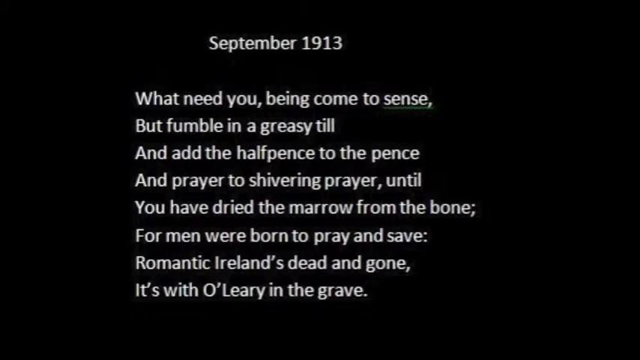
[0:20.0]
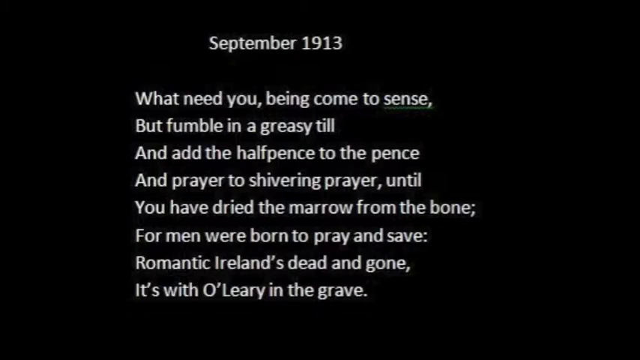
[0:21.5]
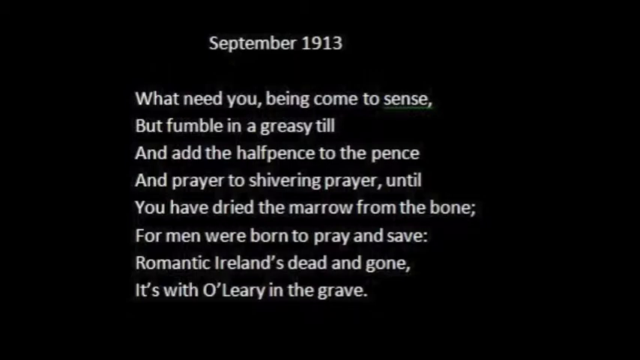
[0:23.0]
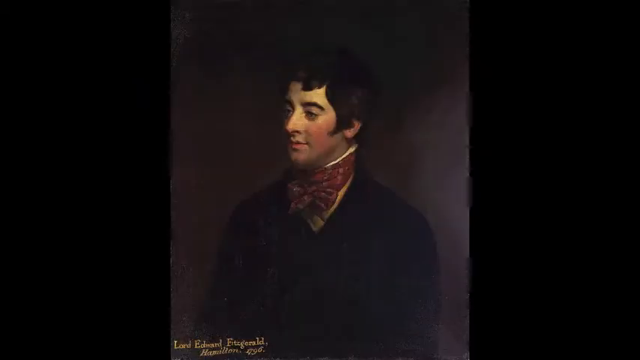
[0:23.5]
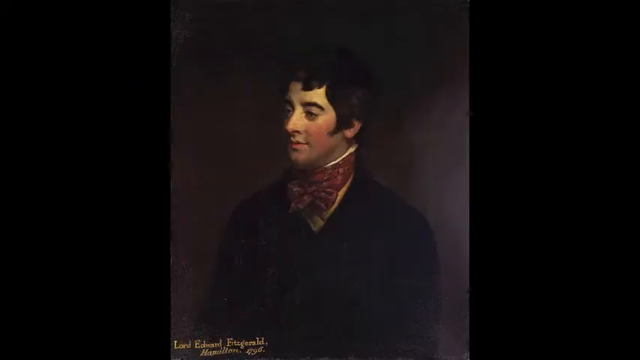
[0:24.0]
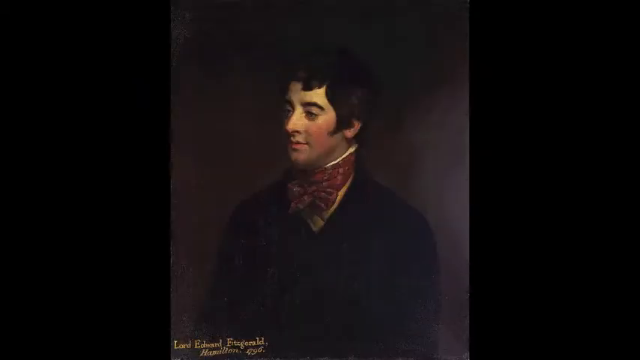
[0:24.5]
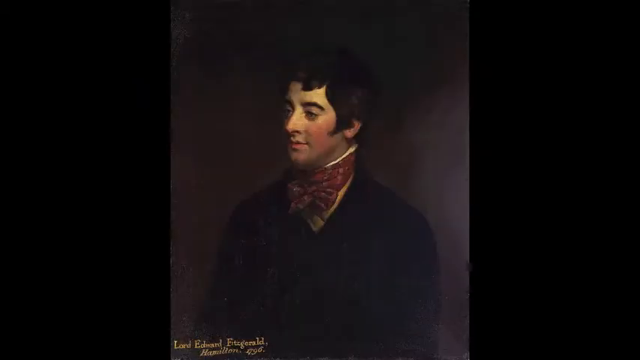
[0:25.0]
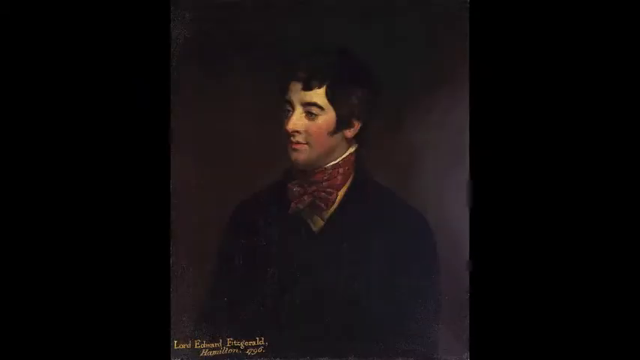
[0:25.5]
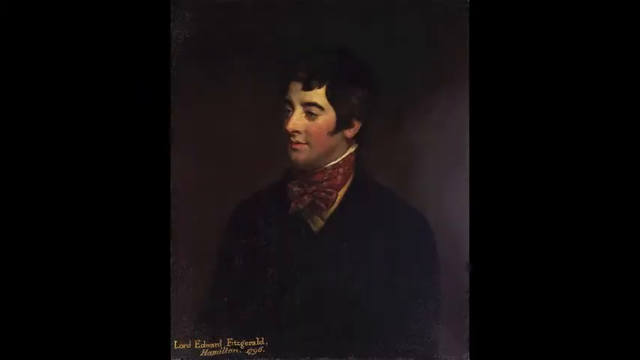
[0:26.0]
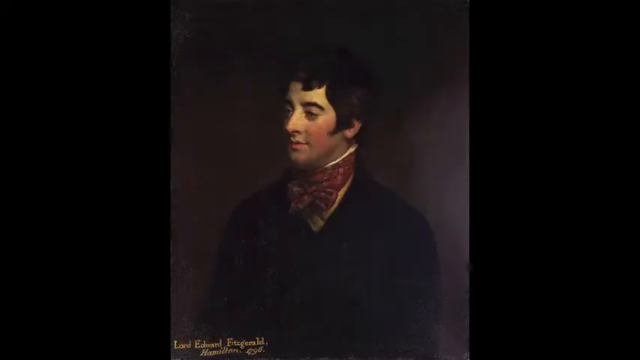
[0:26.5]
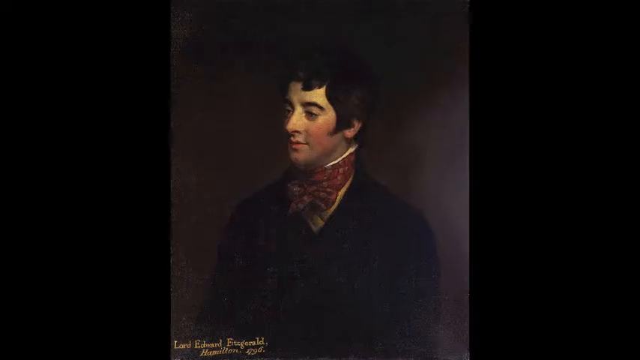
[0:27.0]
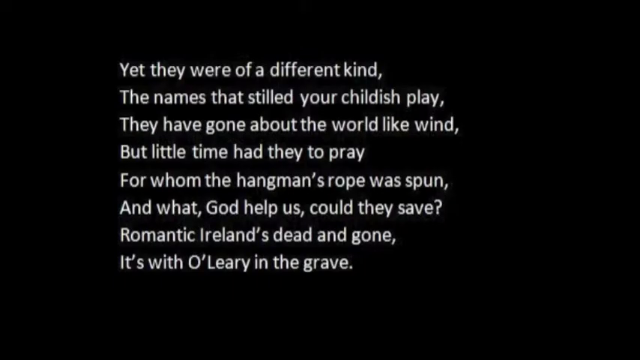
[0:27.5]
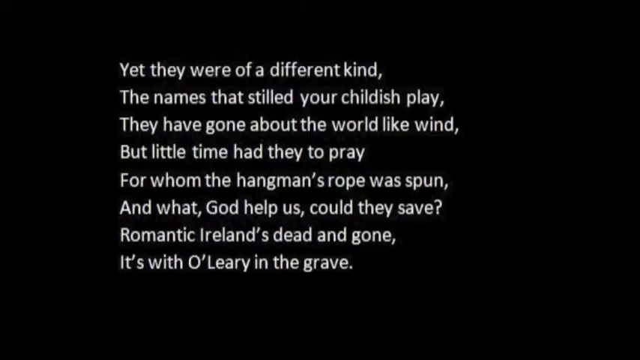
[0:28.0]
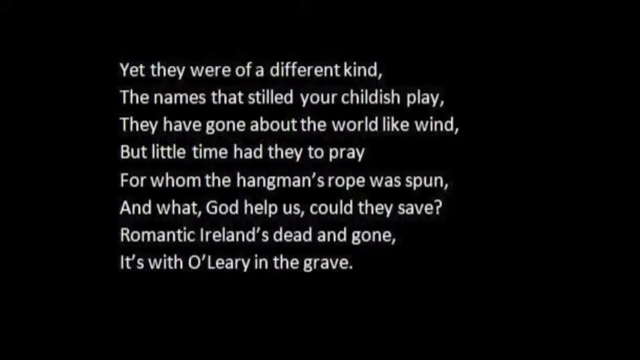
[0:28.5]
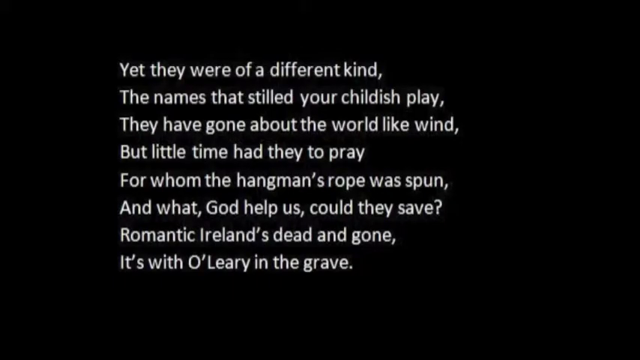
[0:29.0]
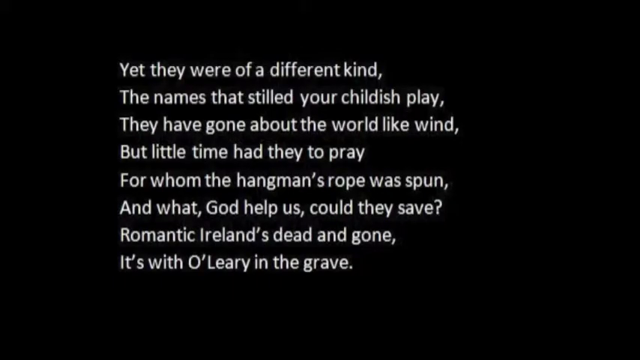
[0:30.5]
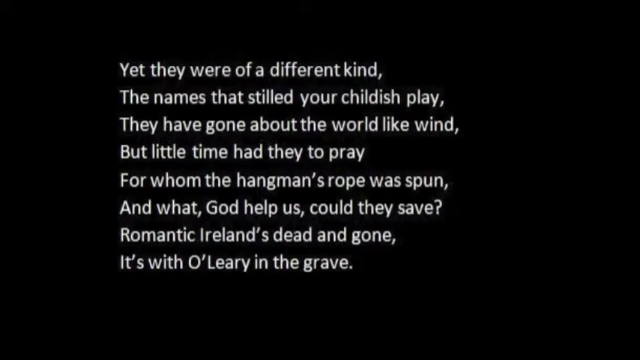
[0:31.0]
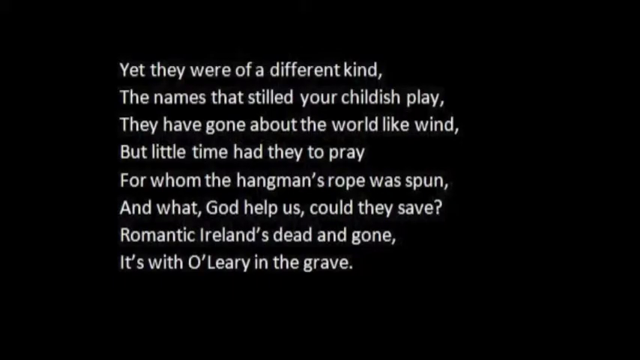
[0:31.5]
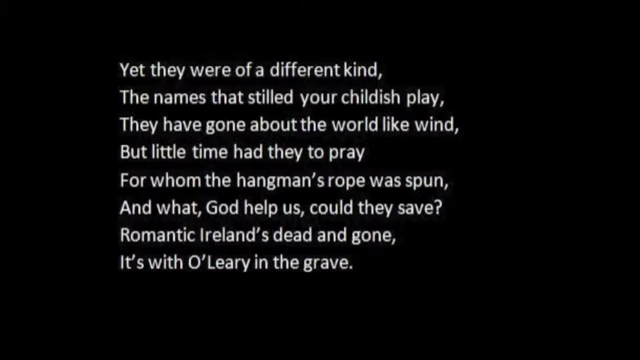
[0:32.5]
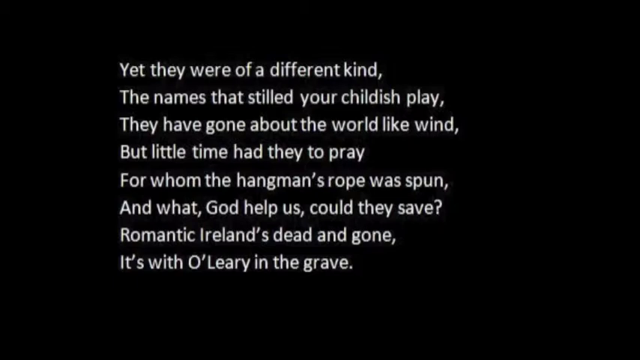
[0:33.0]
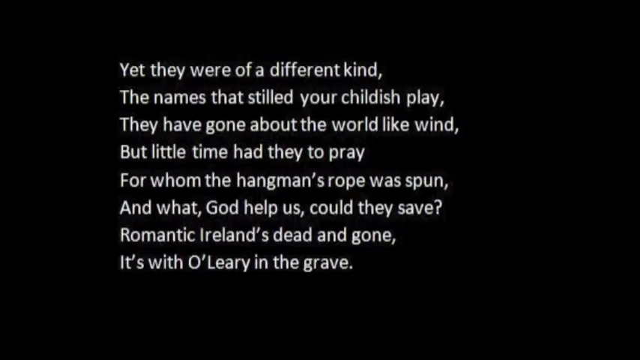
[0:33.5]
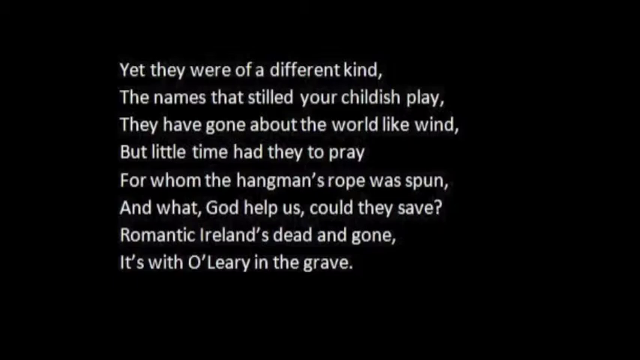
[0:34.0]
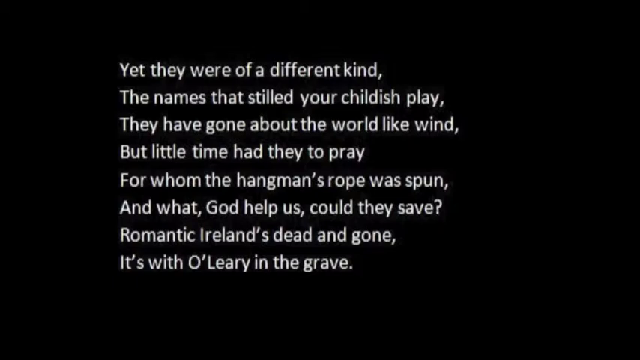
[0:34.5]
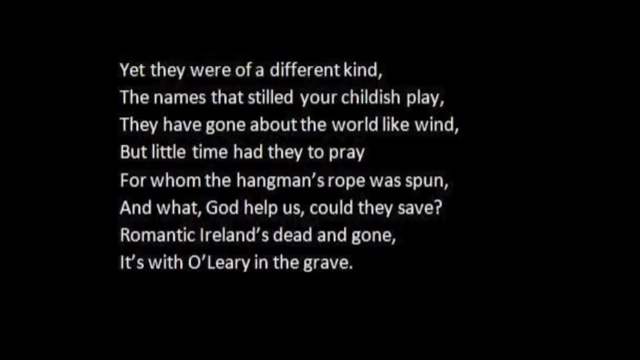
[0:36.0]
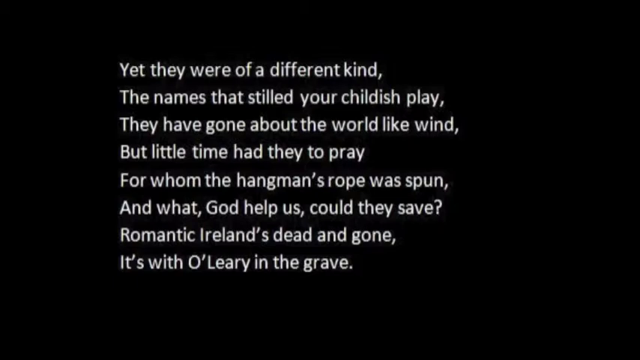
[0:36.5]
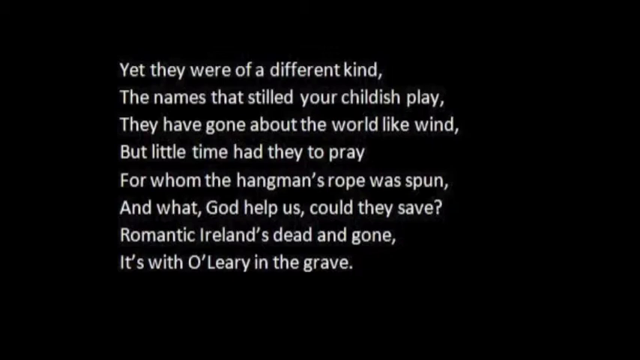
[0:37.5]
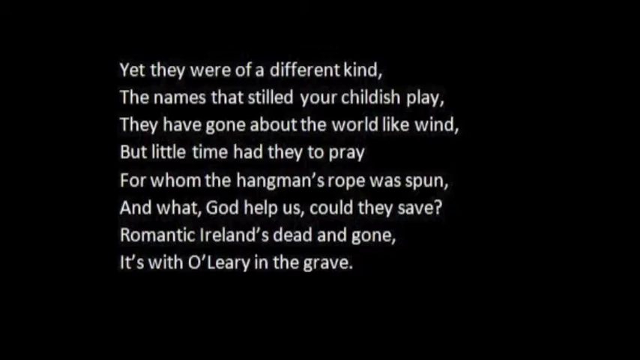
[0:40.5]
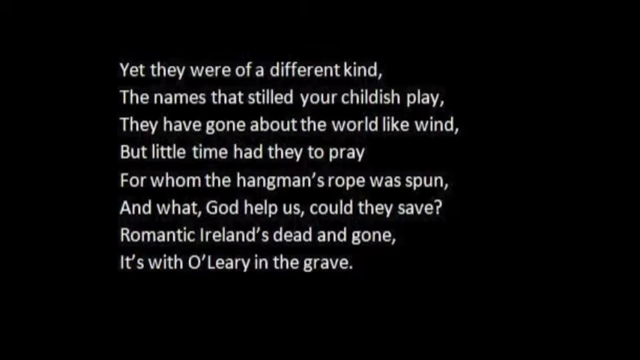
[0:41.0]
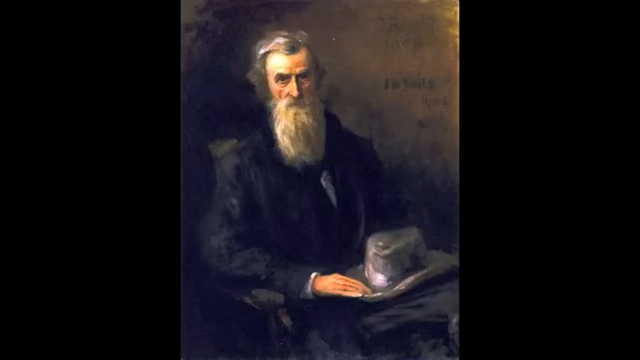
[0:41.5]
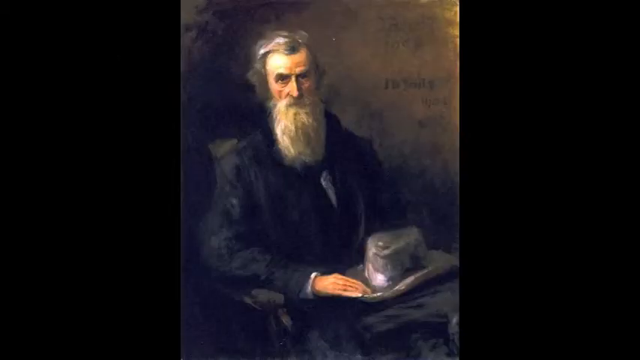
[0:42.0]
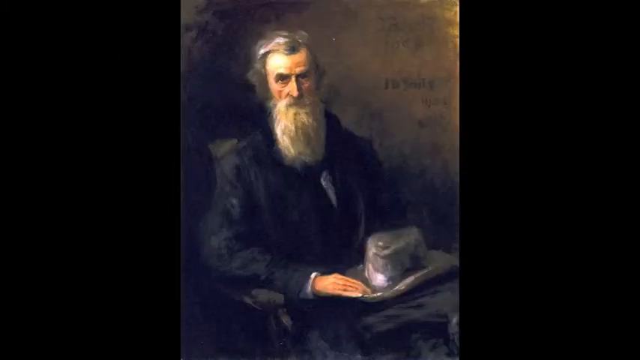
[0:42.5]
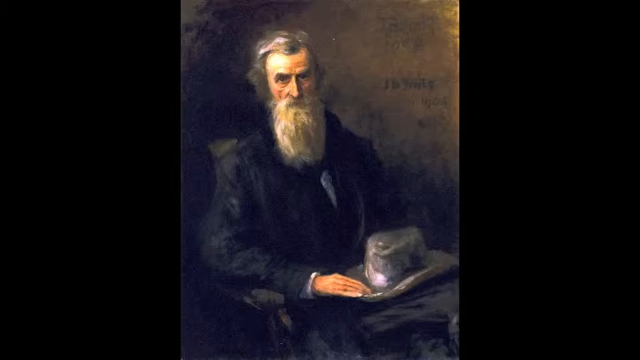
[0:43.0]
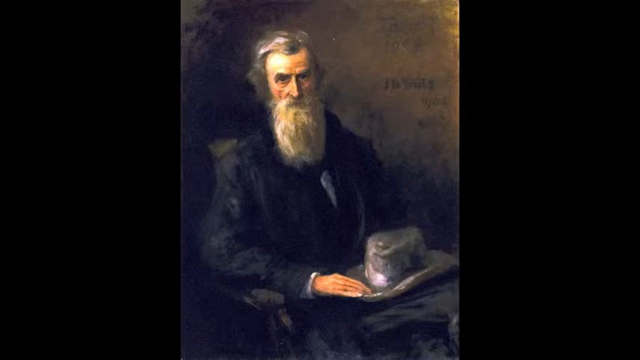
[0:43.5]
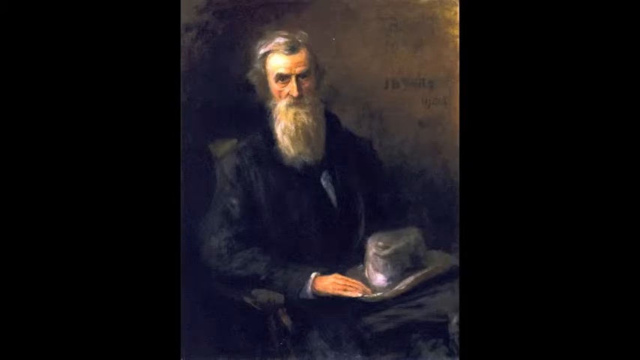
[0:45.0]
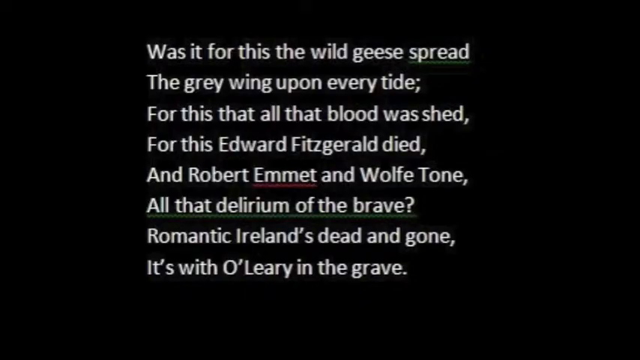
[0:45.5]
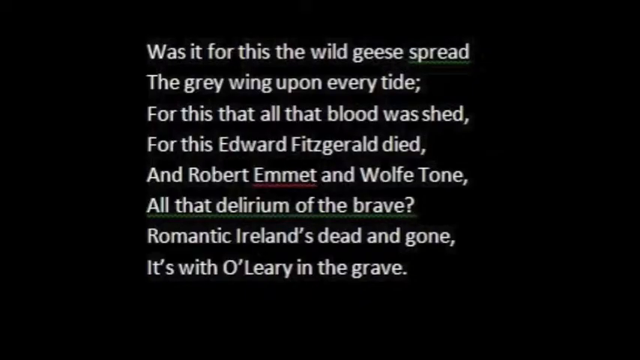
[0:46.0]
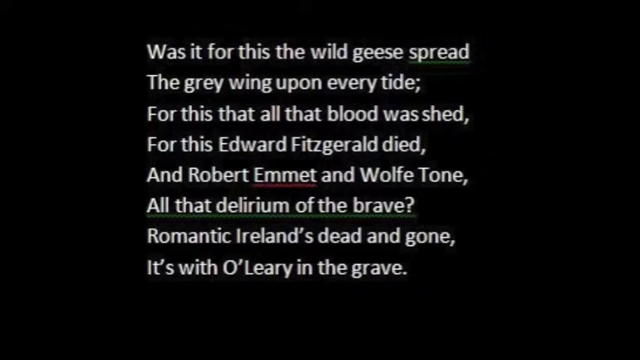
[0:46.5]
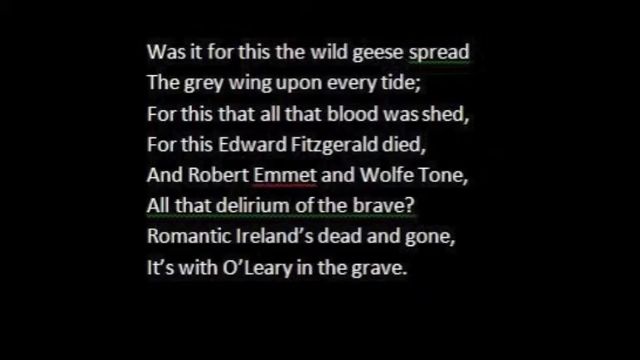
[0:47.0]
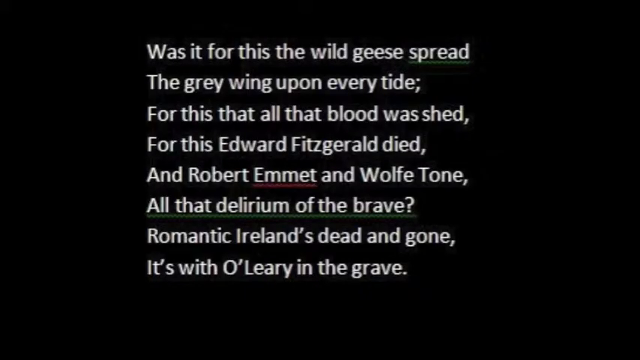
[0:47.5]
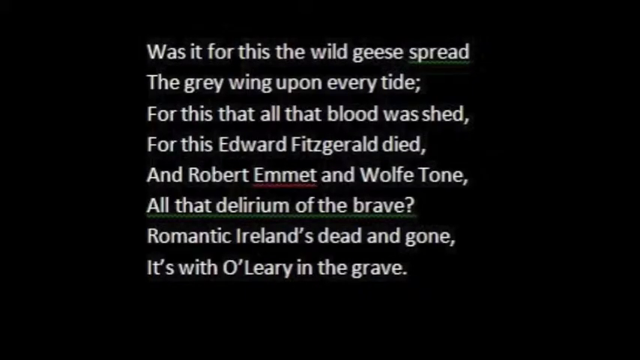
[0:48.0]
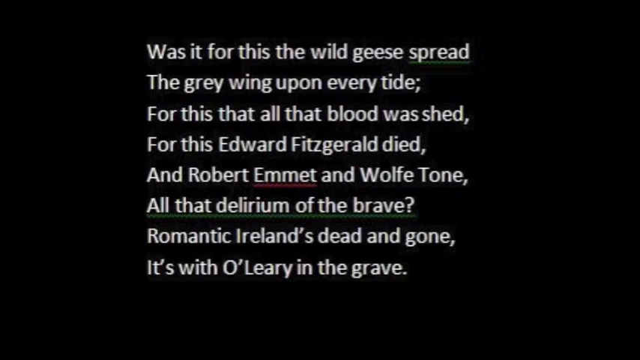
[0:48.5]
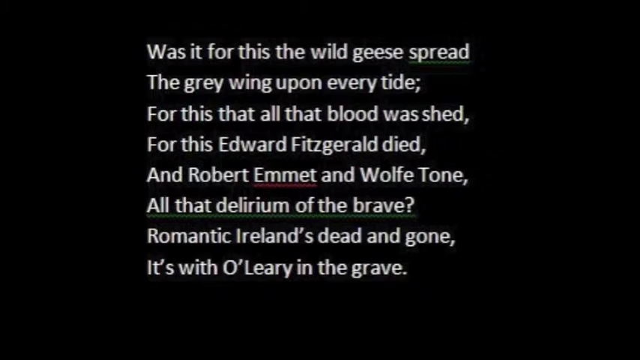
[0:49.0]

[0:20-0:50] A picture of a man appears, with what seems to be the person's name or signature down in the corner. Then printed words appear: "Yet they were of a different kind, the names that stilled your childish play. They have gone about the world like wind, but little time had they to pray. For whom the hangman's rope was spun, and what God help us could they save? Romantic Ireland's dead and gone, it's with O'Leary in the grave." The print is white on an all-black background, so the words stand out. Next comes a picture of an old man sitting and holding a hat on his lap, which quickly gives way to the next part of the poem: "Was it for this the wild geese spread, the gray wing upon every tide? For this that all the blood was shed, for this Edward Fitzgerald died, and Robert Emmett and Wolf Tone, all that delirium of the brave. Romantic Ireland's dead and gone, it's with O'Leary in the grave."